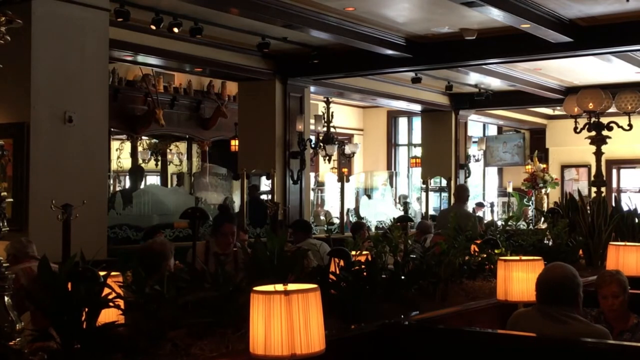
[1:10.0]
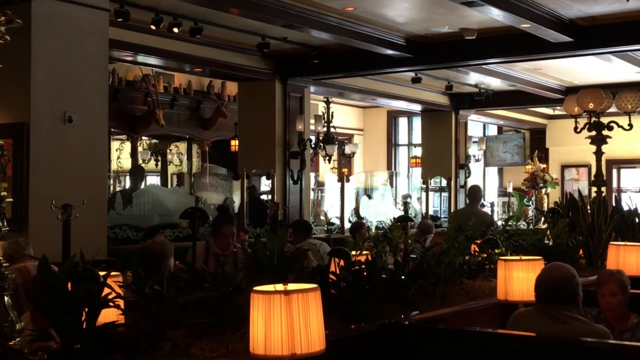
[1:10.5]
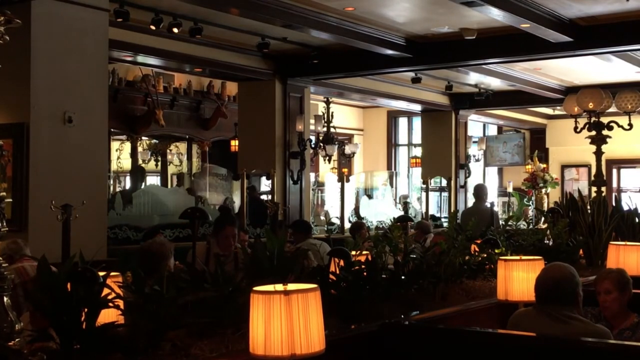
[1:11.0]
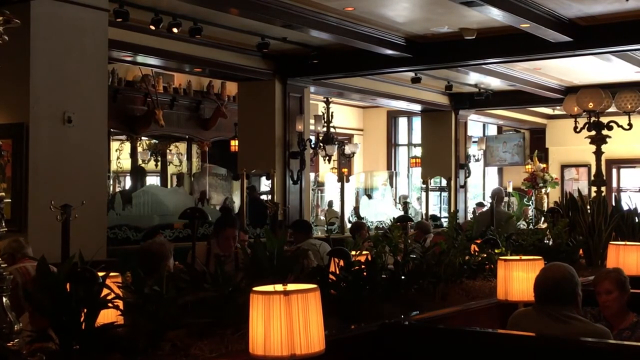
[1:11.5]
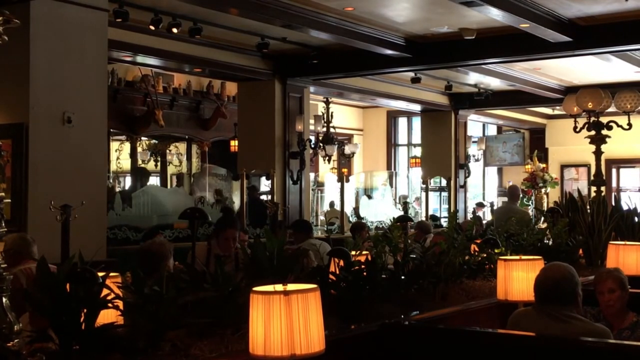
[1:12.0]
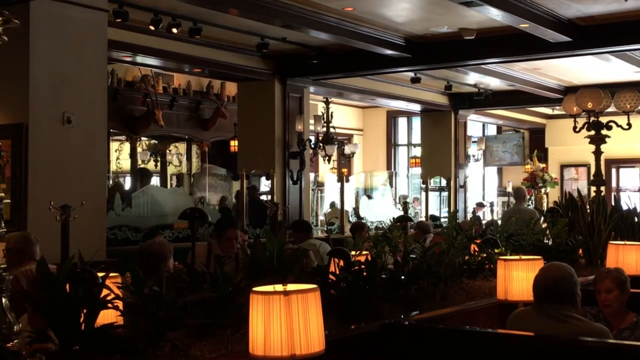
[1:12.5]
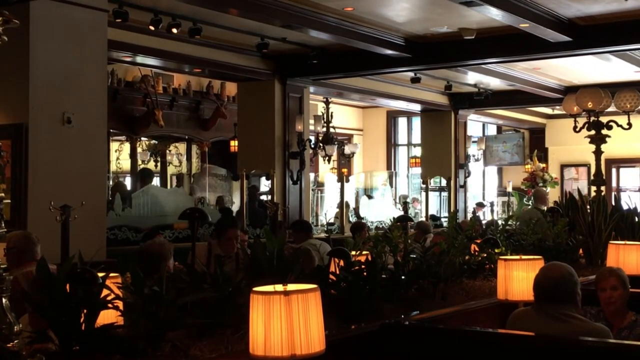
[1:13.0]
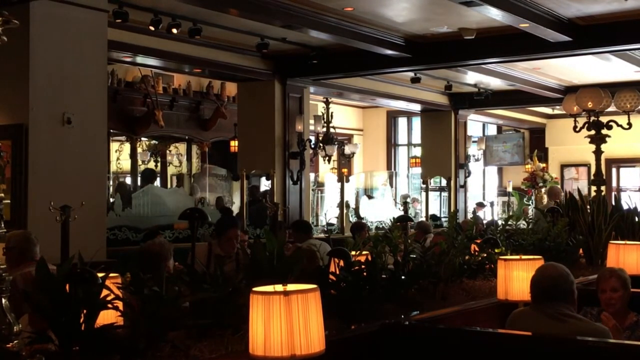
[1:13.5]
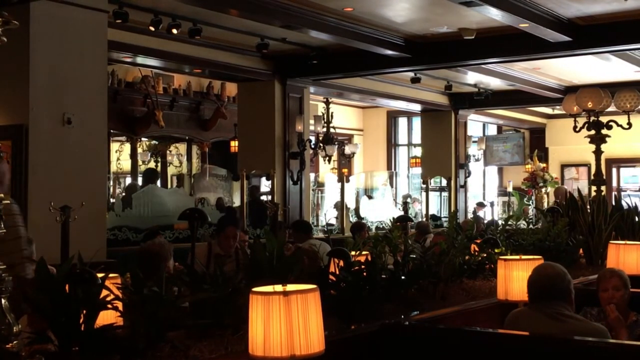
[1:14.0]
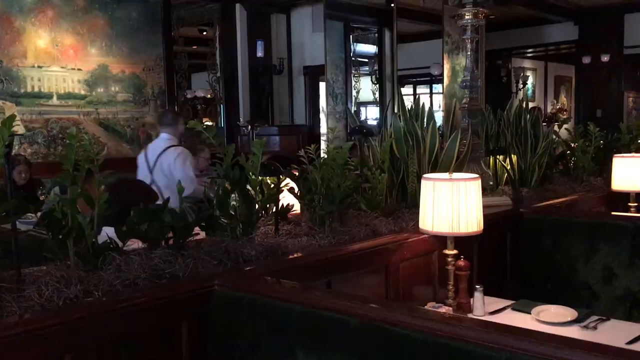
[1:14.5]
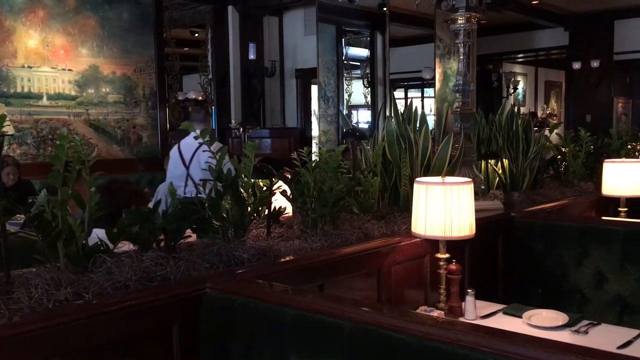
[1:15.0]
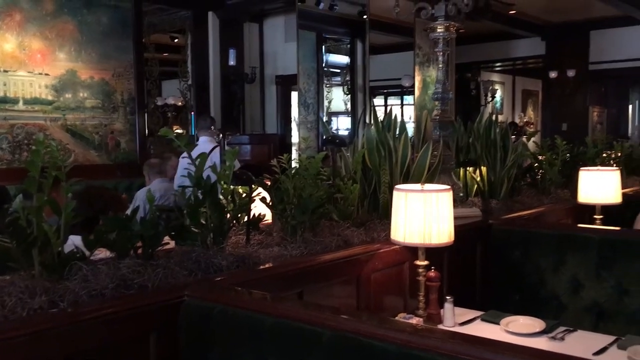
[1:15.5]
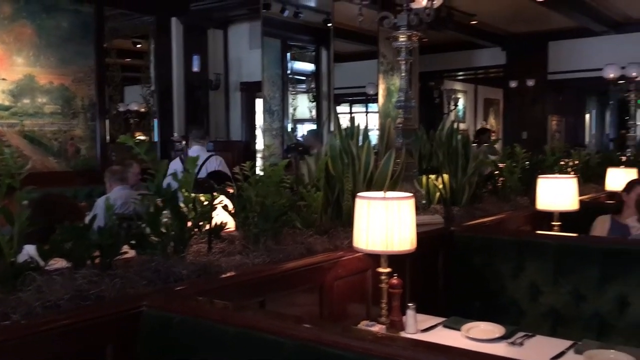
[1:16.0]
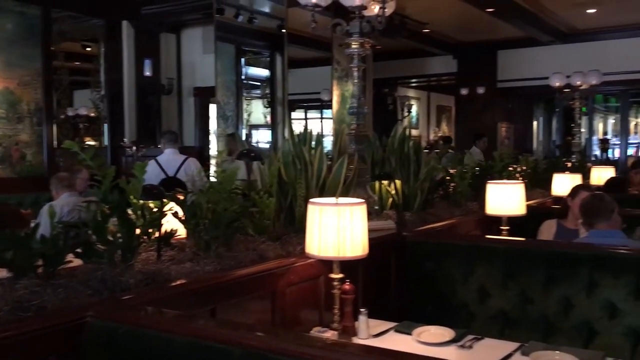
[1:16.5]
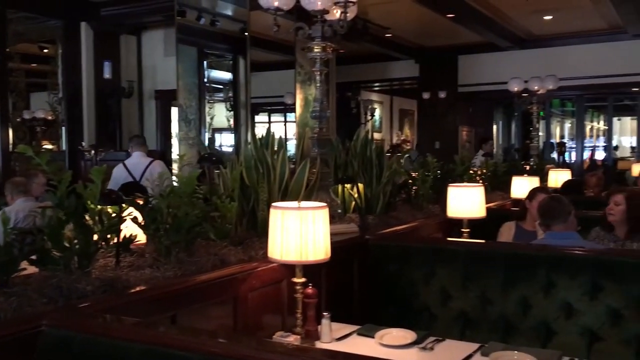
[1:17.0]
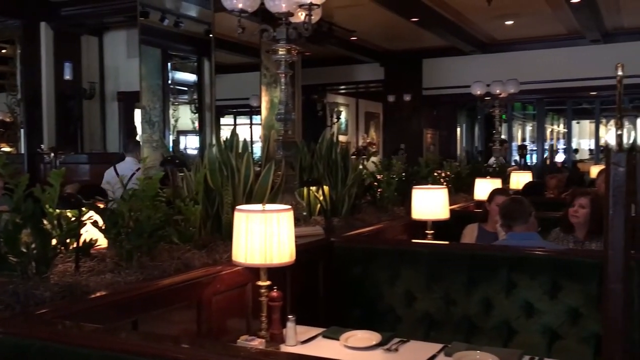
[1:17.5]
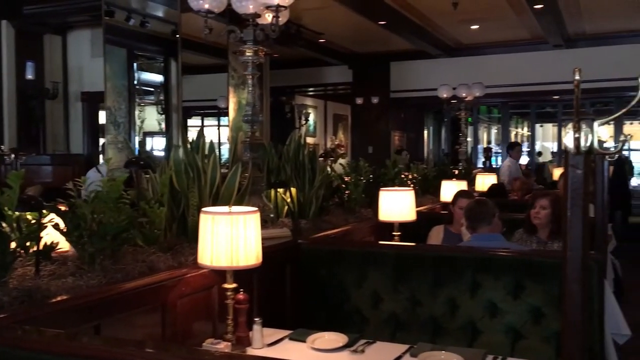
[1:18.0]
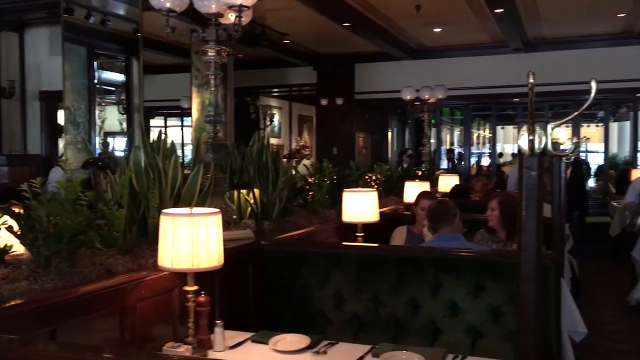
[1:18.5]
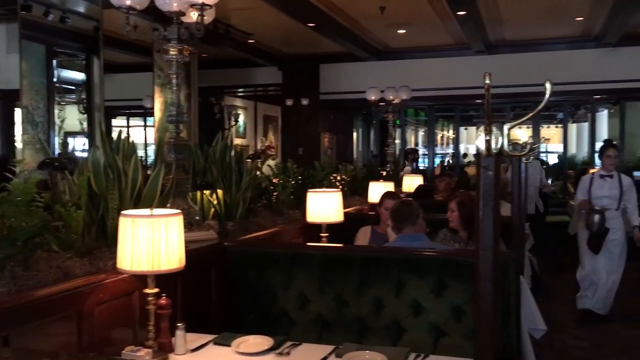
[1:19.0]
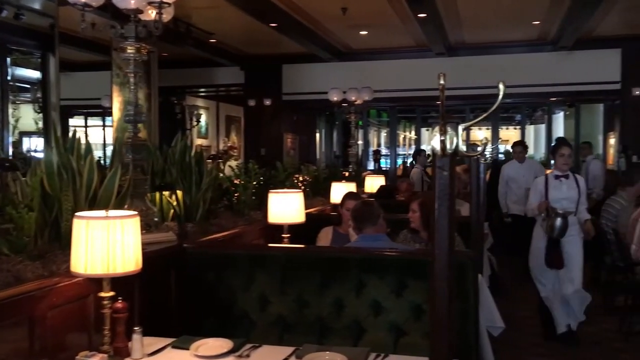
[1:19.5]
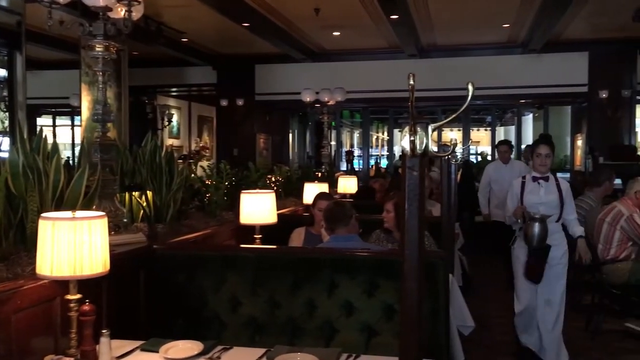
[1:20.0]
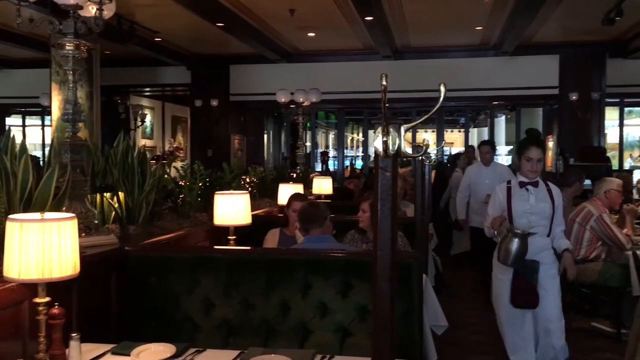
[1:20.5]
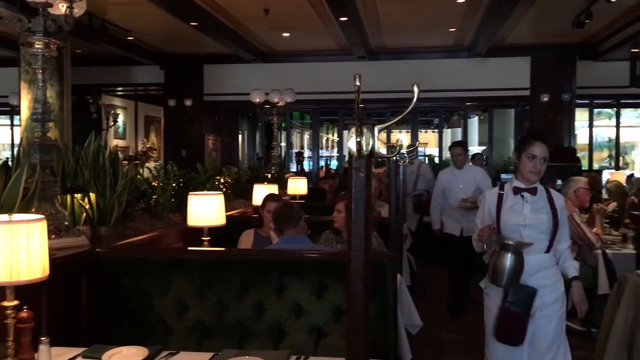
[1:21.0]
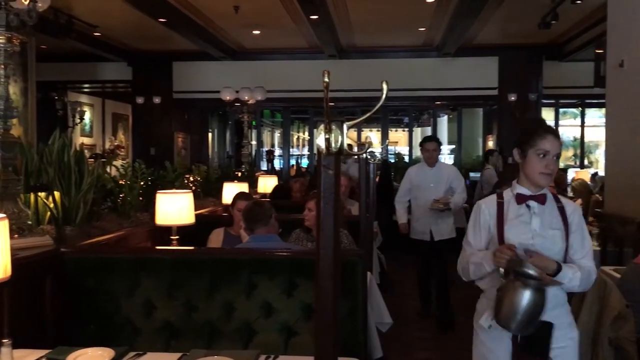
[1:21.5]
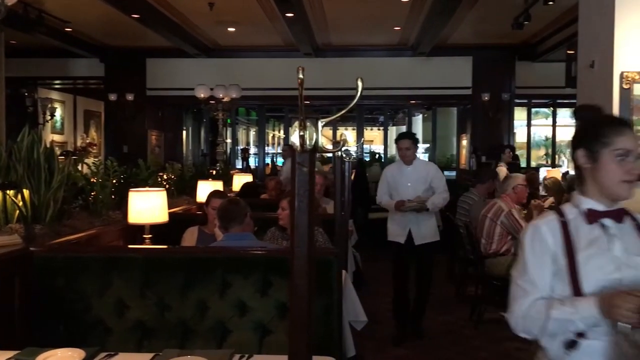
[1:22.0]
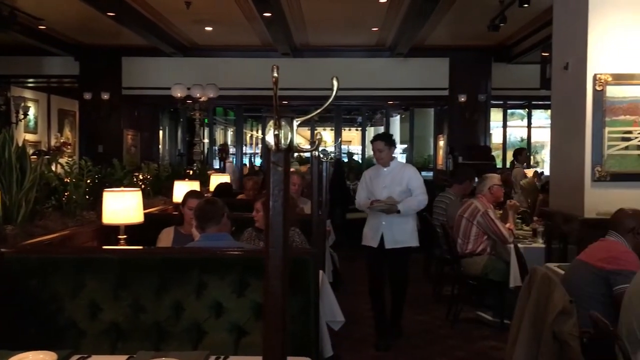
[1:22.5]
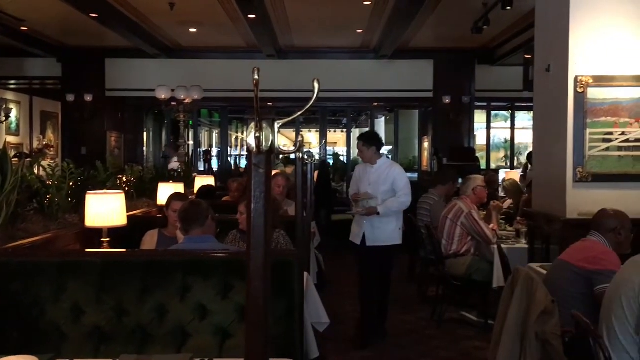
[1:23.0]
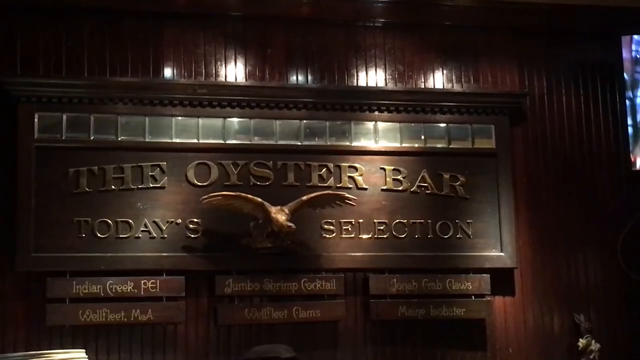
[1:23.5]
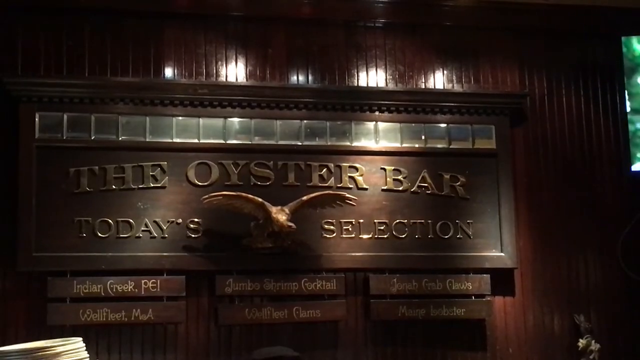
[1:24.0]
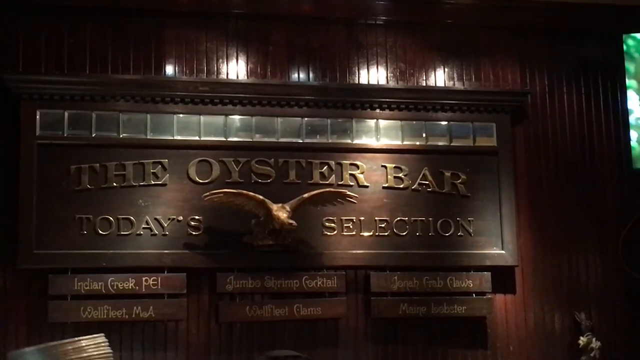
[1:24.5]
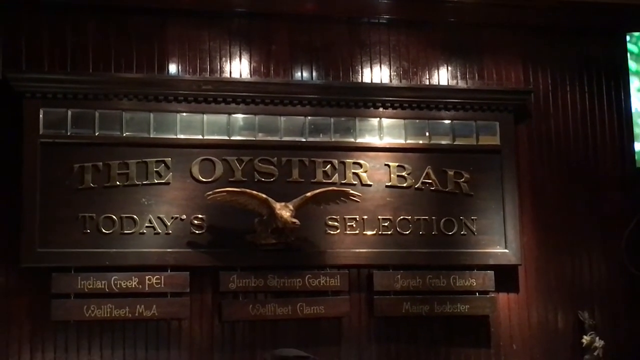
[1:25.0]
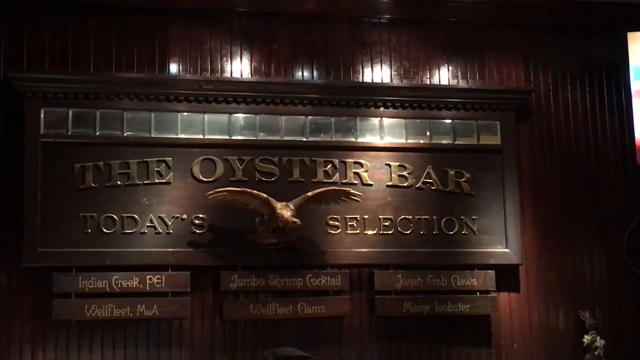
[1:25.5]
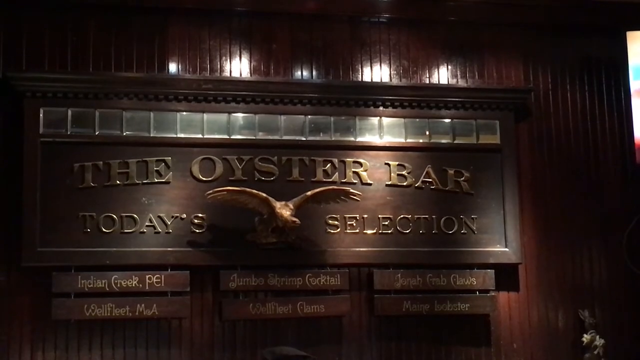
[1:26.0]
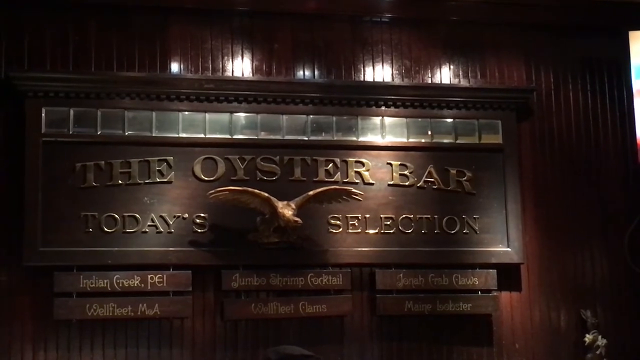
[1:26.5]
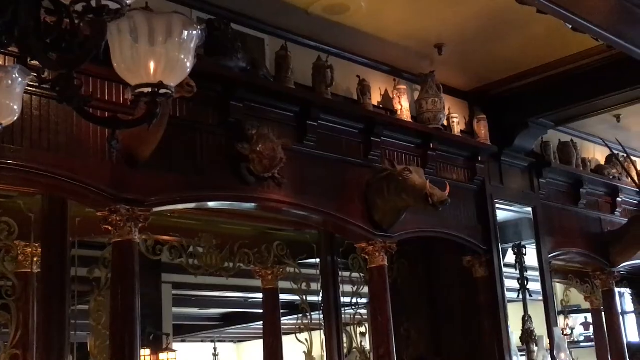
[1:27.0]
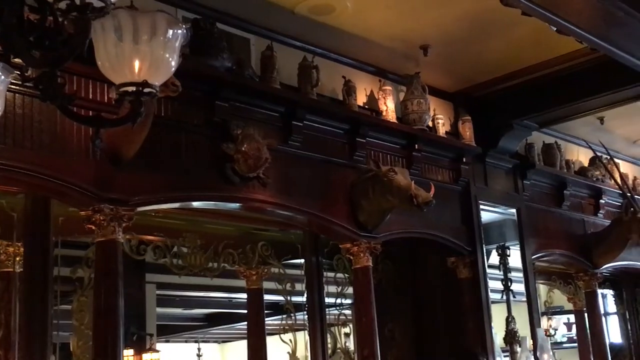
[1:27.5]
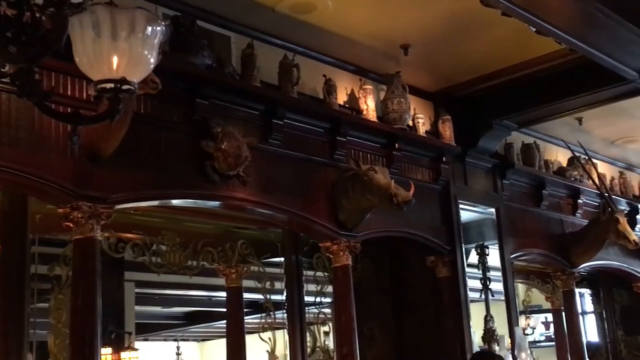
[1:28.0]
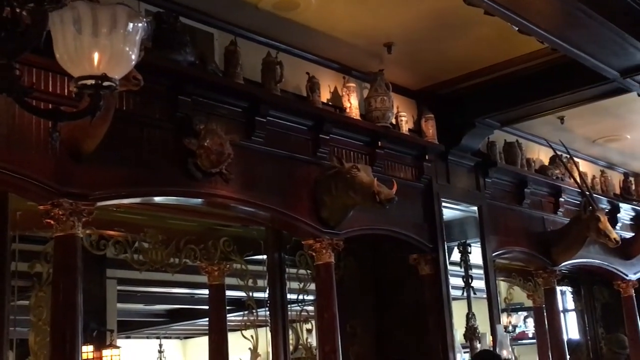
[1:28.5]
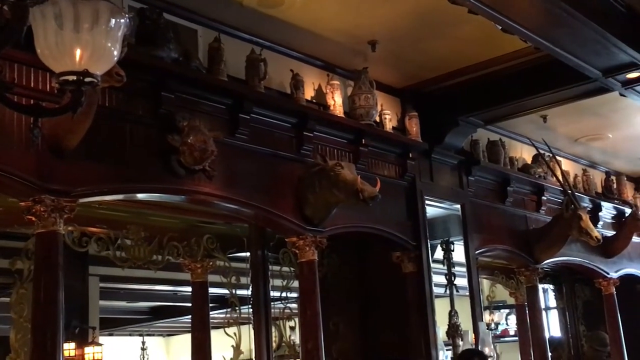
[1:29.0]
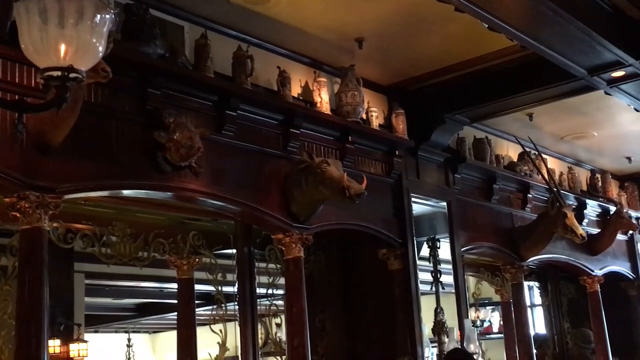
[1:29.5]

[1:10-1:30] The modern-day dining area has a darker ambience, with dim lighting. There are lamps at every table and some plants that make the spaces seem more separated. Waiters in black pants and white jackets can be seen going to tables and speaking to the people there. The video then shows another outdoor bar area or another restaurant, apparently an oyster bar, and then its interior, which is also dark and made of wood.